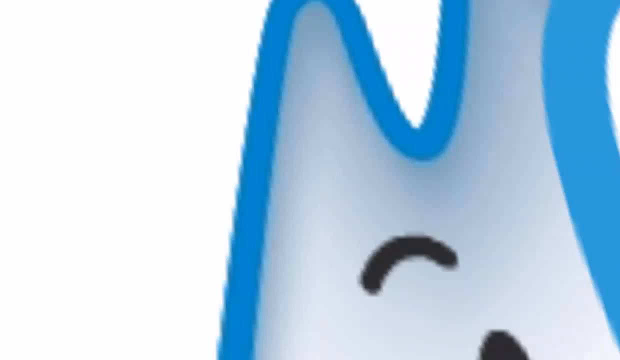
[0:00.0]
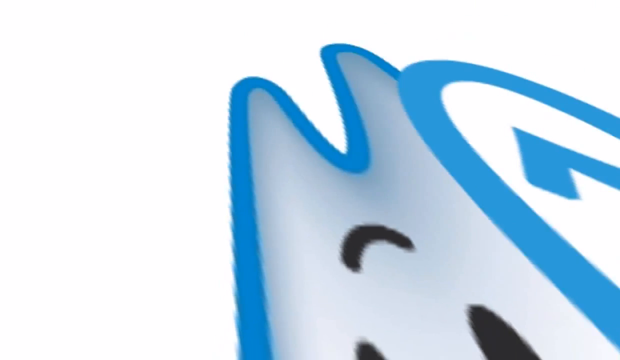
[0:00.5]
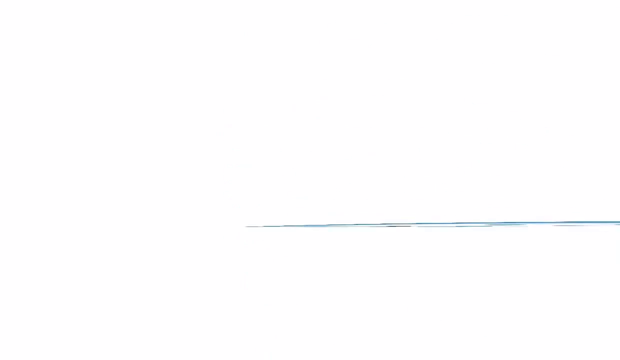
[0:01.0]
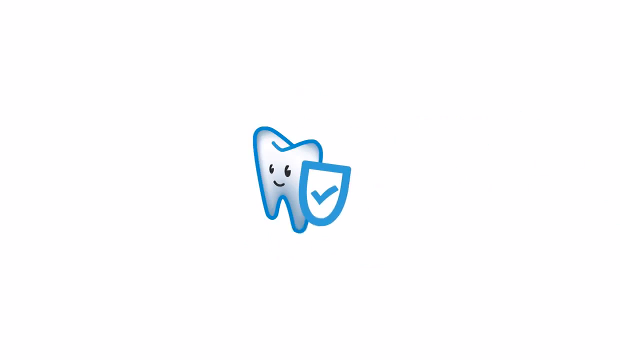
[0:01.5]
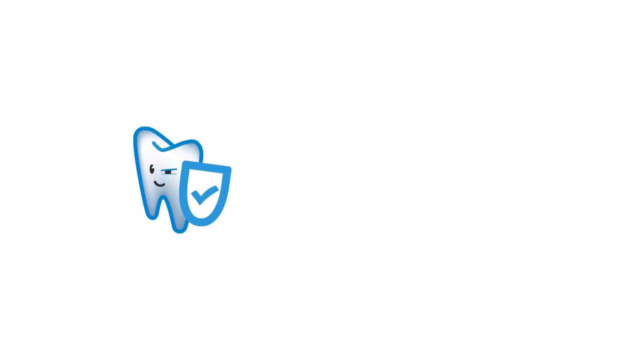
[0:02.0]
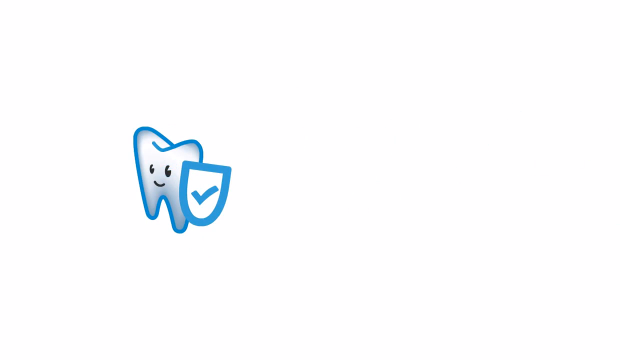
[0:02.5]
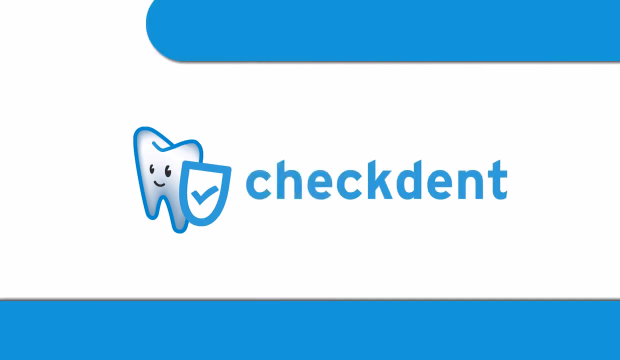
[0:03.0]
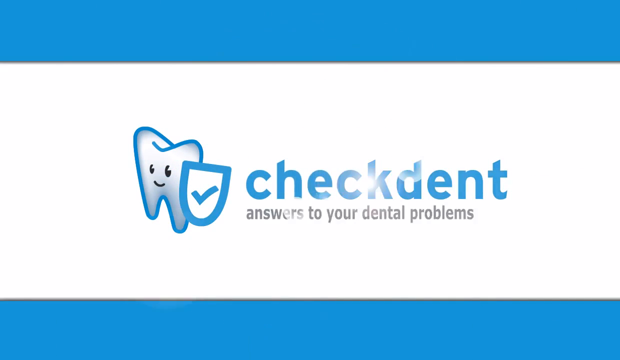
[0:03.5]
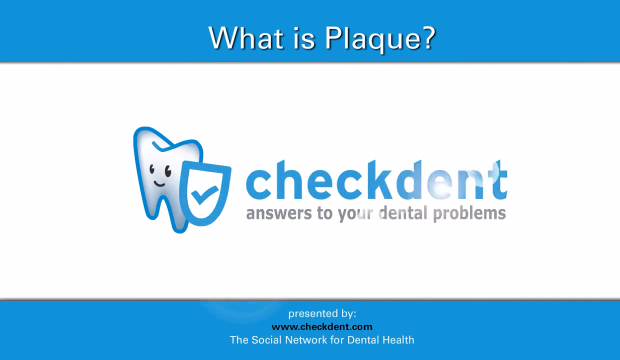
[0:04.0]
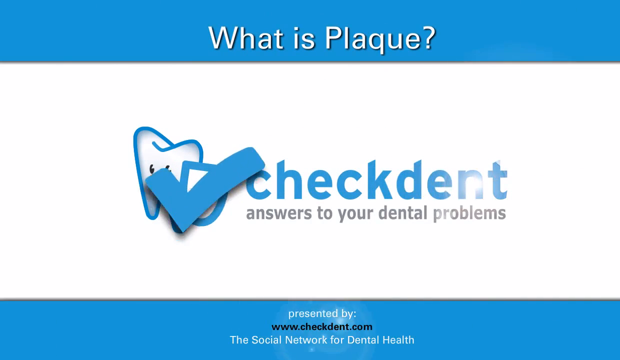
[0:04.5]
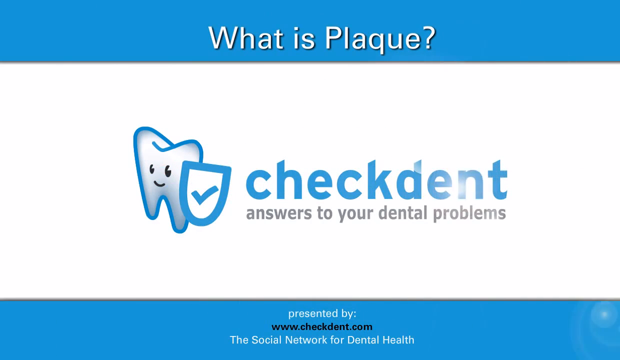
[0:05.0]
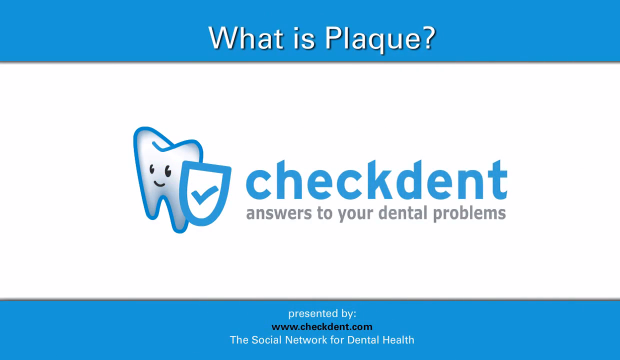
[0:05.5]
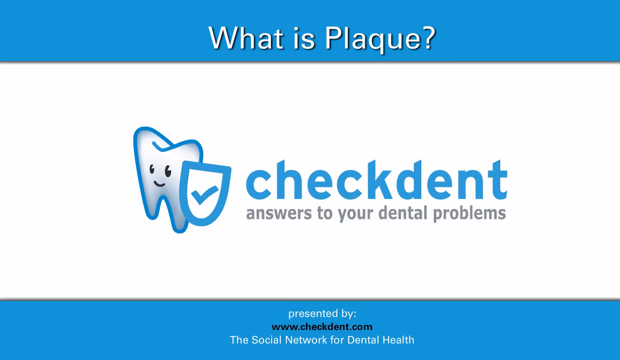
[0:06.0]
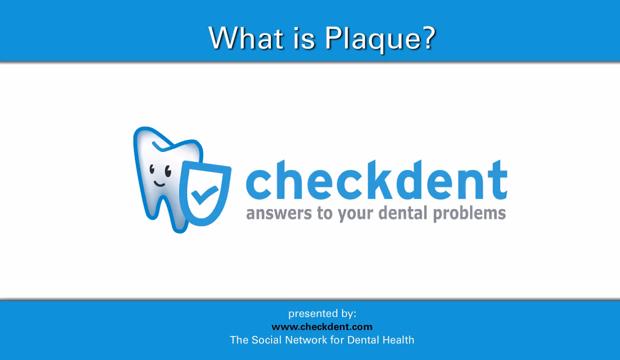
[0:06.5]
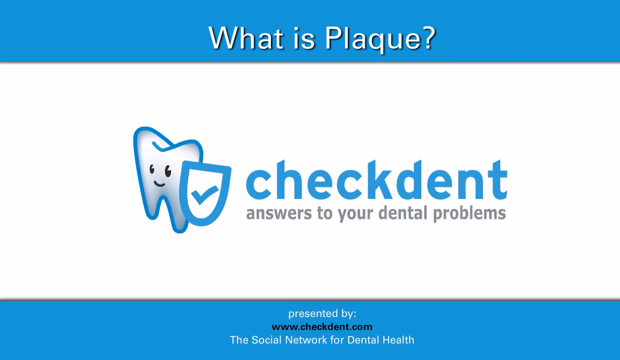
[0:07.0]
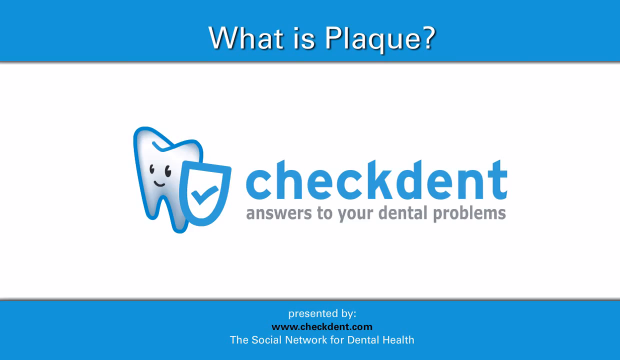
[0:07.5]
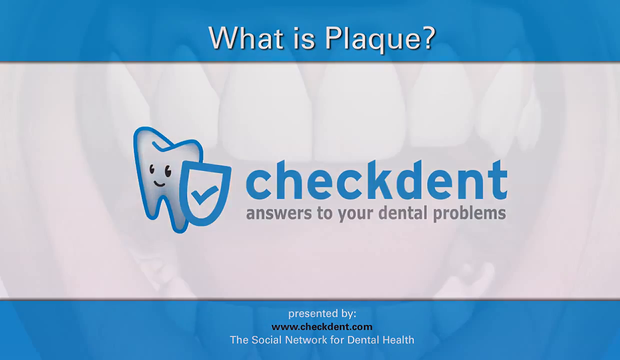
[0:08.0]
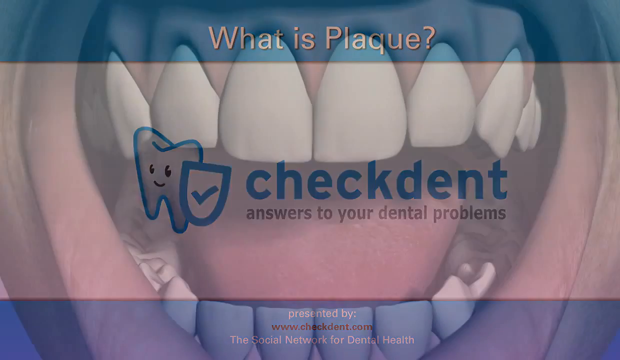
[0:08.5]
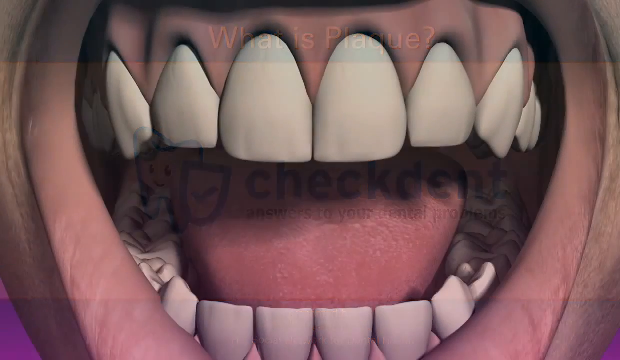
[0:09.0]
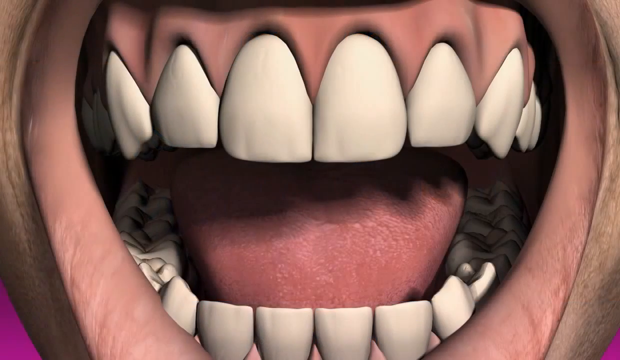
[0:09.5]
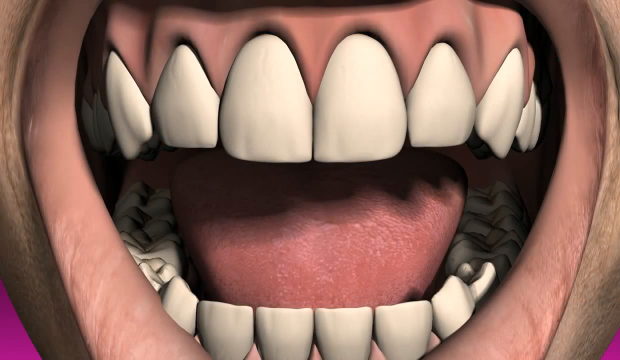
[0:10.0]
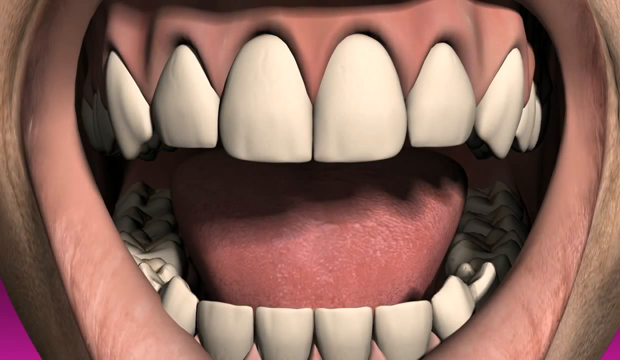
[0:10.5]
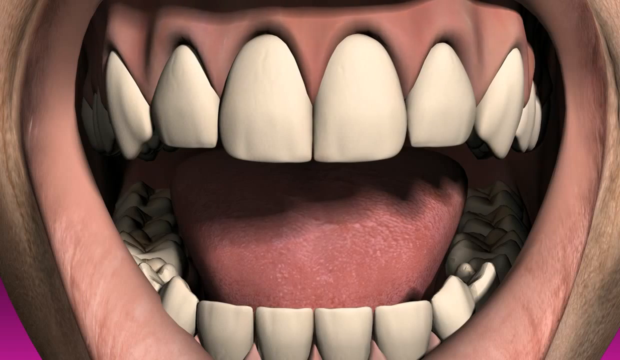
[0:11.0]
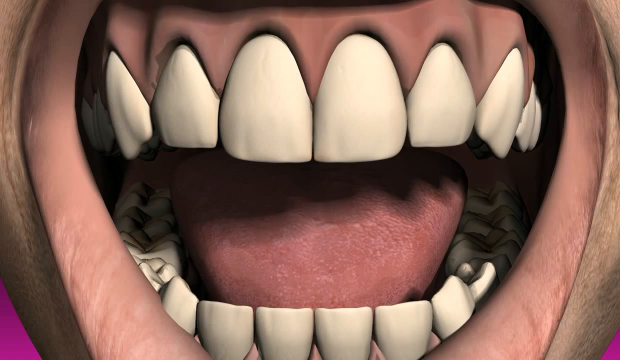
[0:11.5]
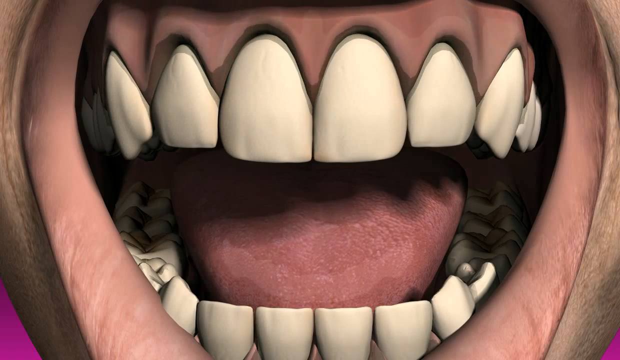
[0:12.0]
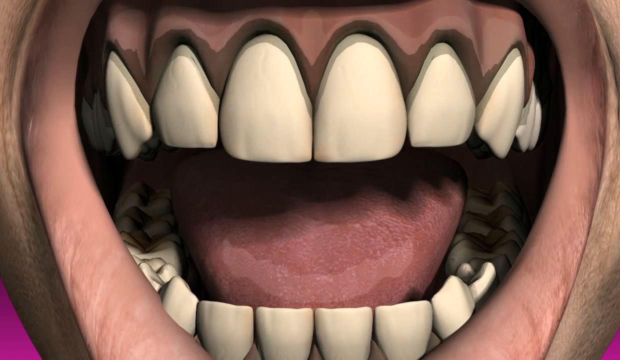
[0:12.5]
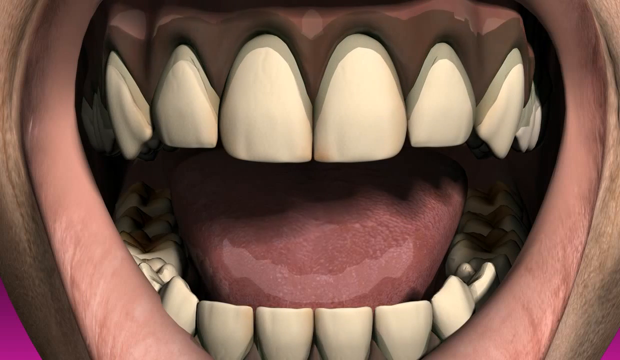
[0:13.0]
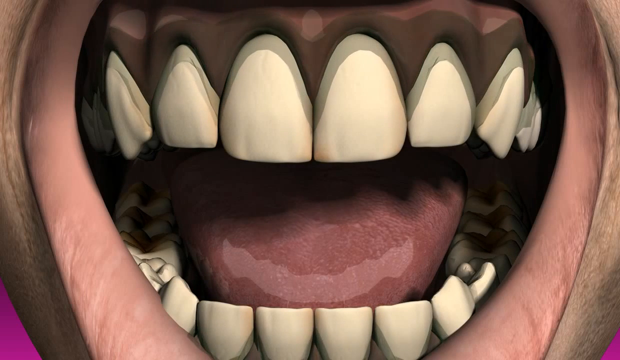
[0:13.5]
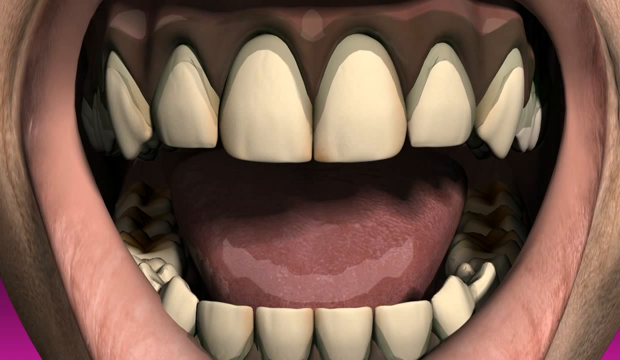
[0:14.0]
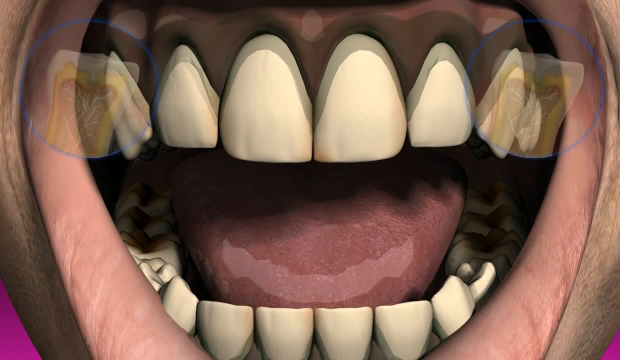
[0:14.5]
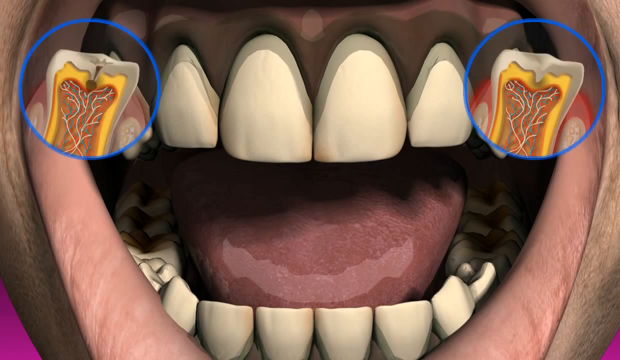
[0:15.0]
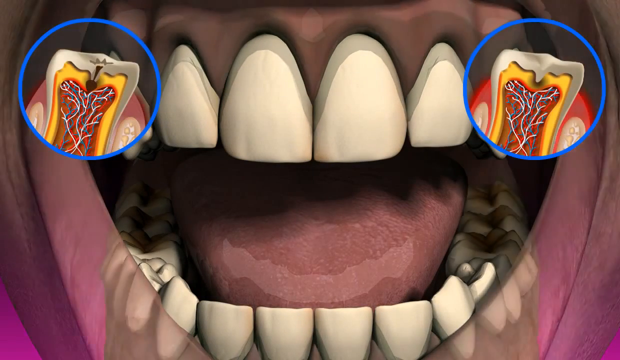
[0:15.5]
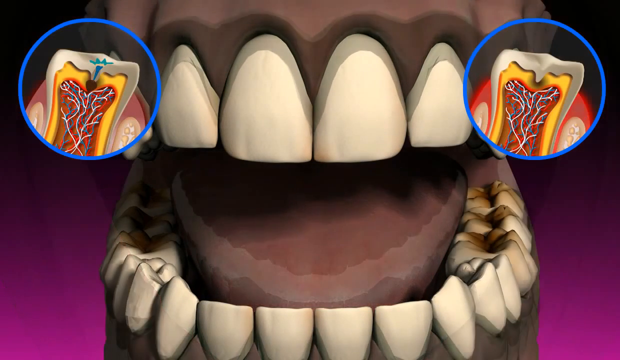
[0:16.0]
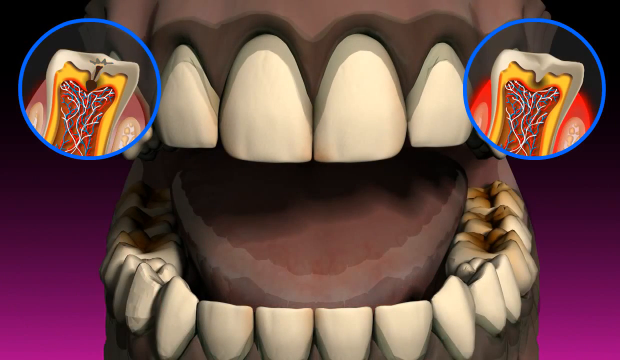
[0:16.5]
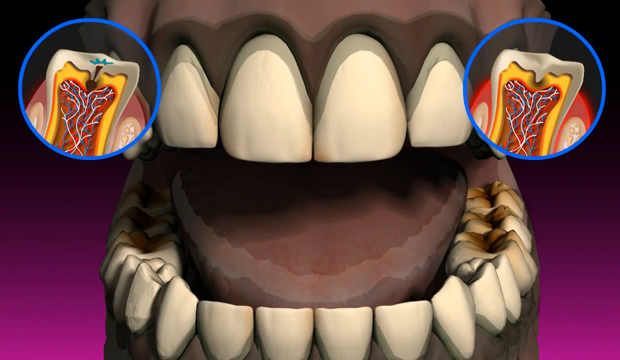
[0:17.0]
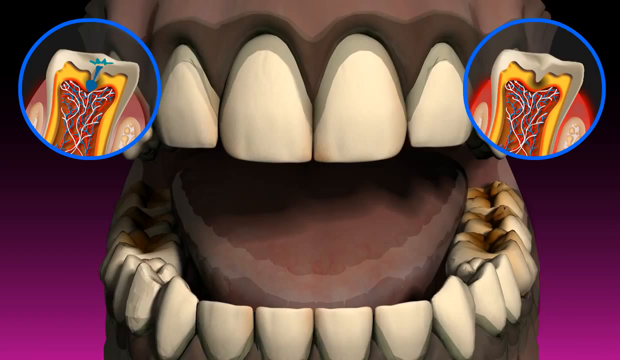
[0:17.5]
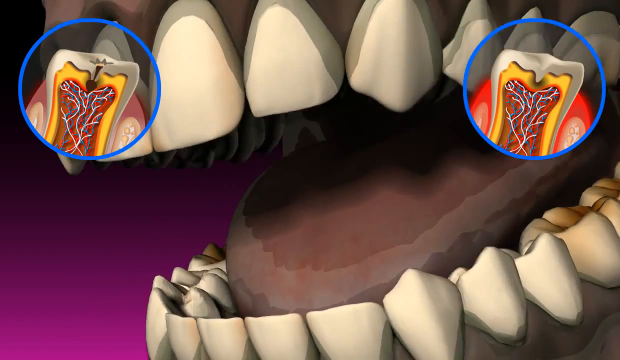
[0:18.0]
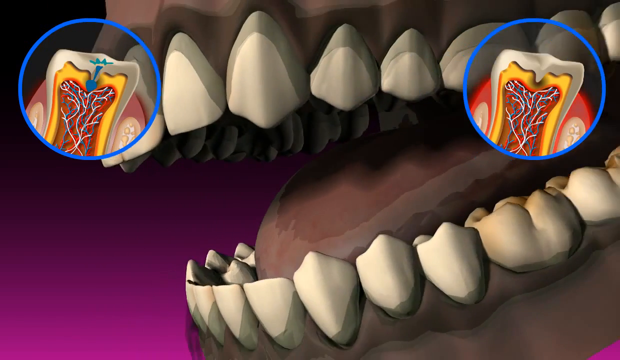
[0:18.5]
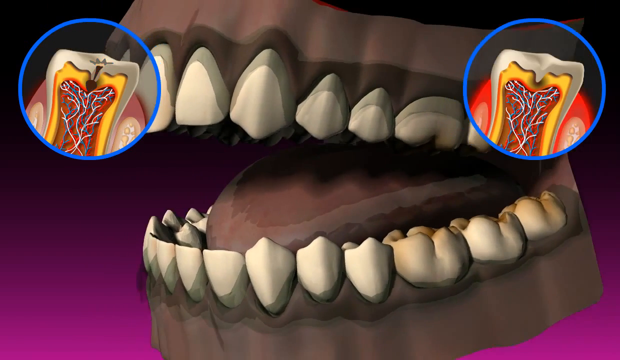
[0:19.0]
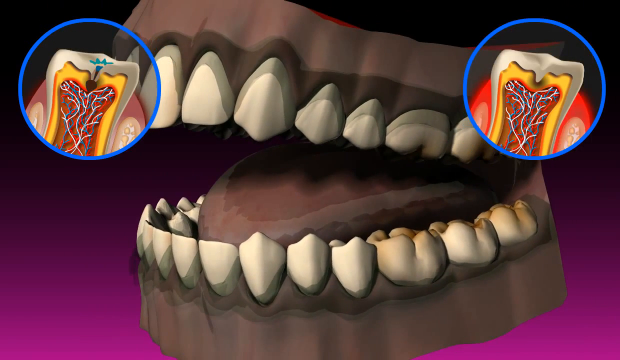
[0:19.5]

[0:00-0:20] An animation opens with a drawing of a white tooth with a blue outline and a smiley face in its center made of two dots and a small curved line for the mouth. To the right of the tooth is a shield with a blue outline and a blue check mark inside. The tooth somersaults from the forefront to the background, then somersaults to the center of the screen, moves to the left of the screen, and winks its right eye. On a white background, blue words appear to the right of the tooth reading "check dent", and beneath them a sentence appears: "answers to your dental problems". A long white bar runs across the center of the screen, with the tooth and the word sitting on it. Above and below the bar are blue strips: the top strip has the words "what is plaque" in white at its center, and the bottom has "presented by www.checkdent.com the social network for dental health". The check mark on the shield enlarges and comes to the forefront of the screen, then returns to the center of the shield. The scene changes to a 3D animation of a person's mouth opening, showing the upper and lower rows of teeth, the tongue and fleshy pink lips. A shadow is cast on the top portion of the teeth. On the left and right sides of the top row of teeth, a blue circle appears, each containing a white tooth showing its insides: the tooth has a yellow outside, and inside are multiple strings and strands of what appear to be nerves, in white, red and blue. The lips are removed so that only the teeth and tongue are visible. The view pans around the teeth to look at them from the left side; the jaw is open and the teeth are not clenched.